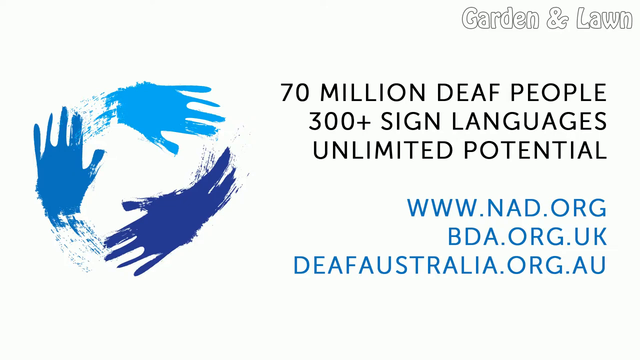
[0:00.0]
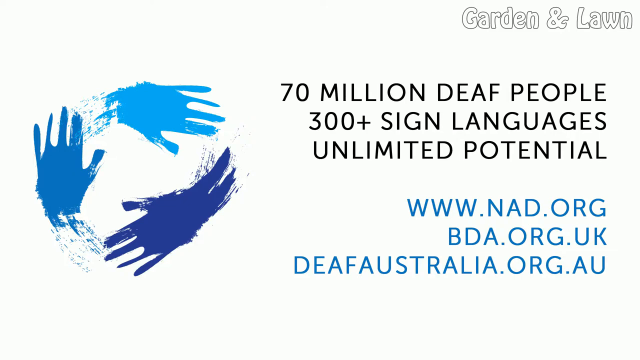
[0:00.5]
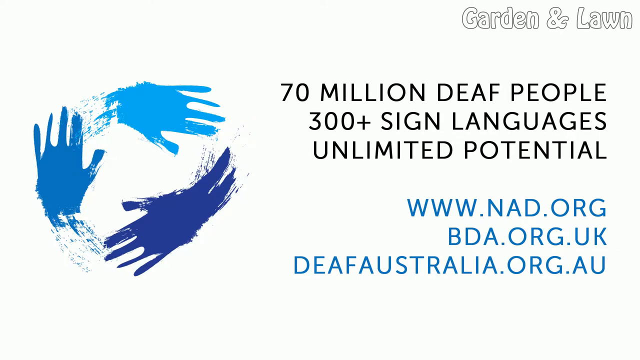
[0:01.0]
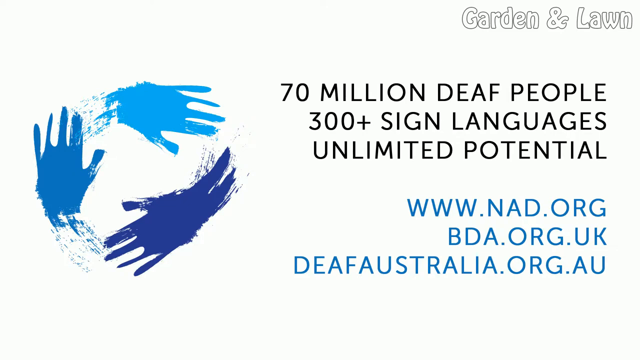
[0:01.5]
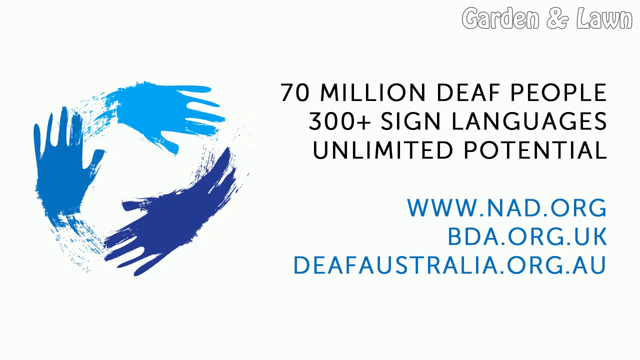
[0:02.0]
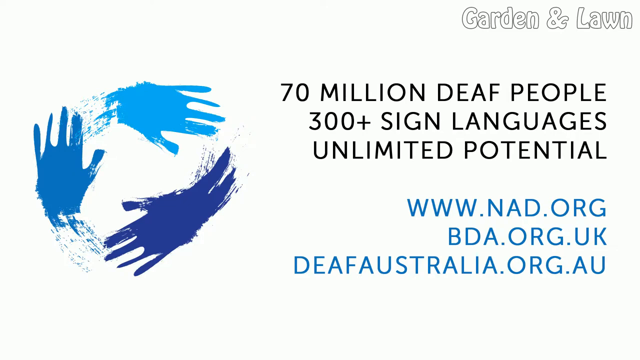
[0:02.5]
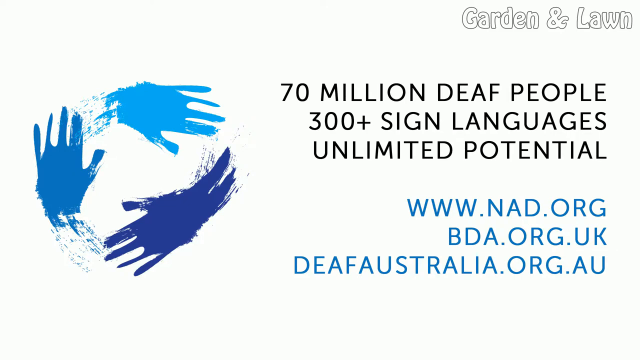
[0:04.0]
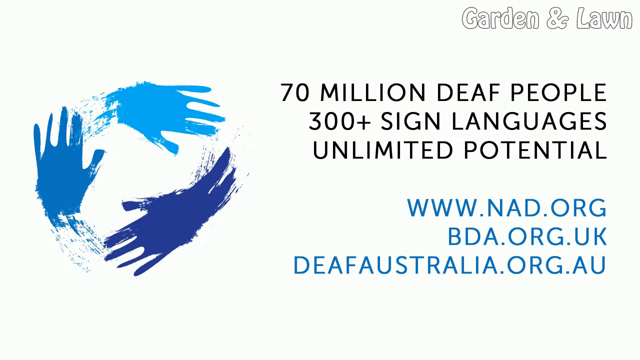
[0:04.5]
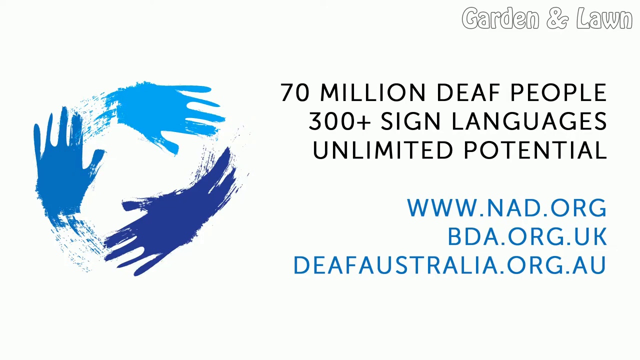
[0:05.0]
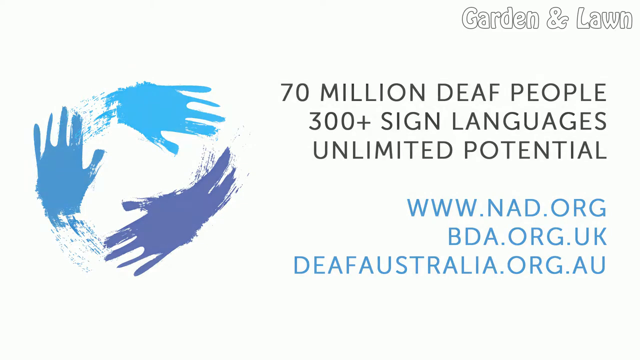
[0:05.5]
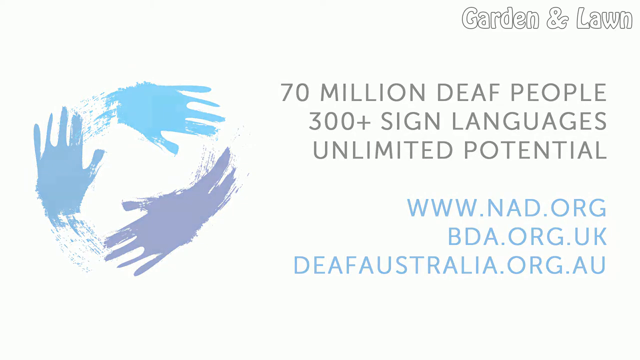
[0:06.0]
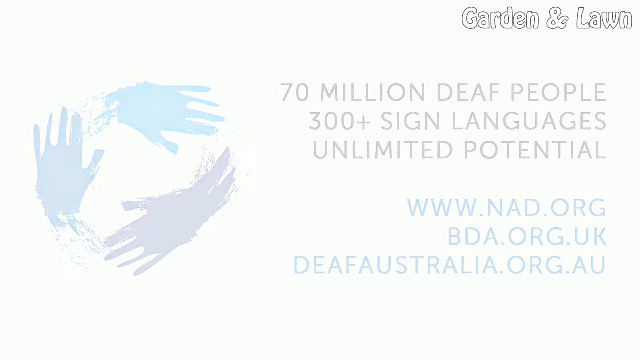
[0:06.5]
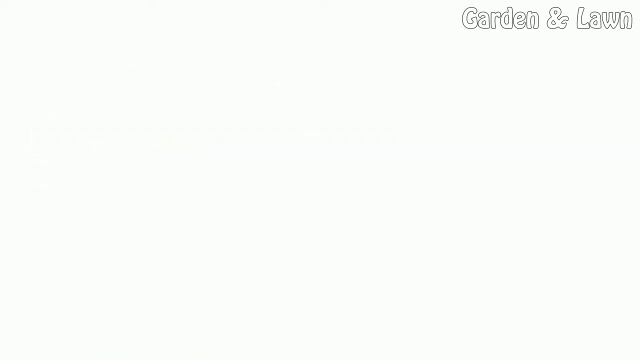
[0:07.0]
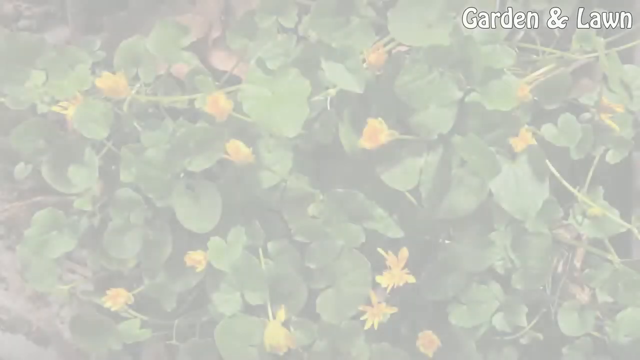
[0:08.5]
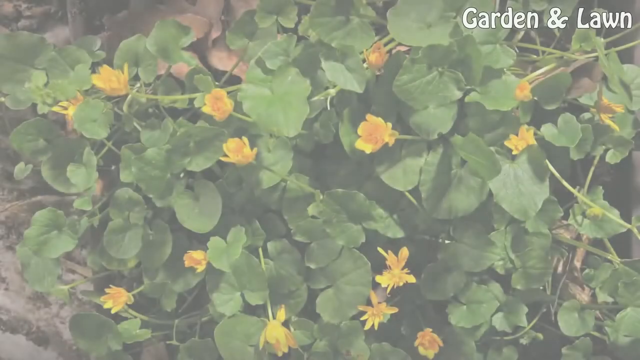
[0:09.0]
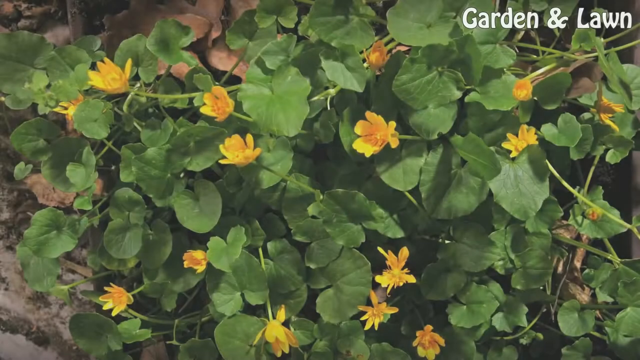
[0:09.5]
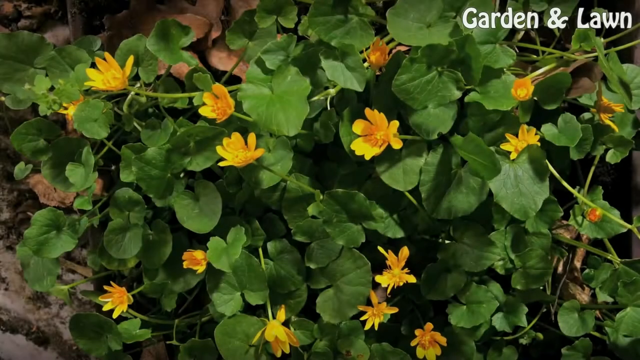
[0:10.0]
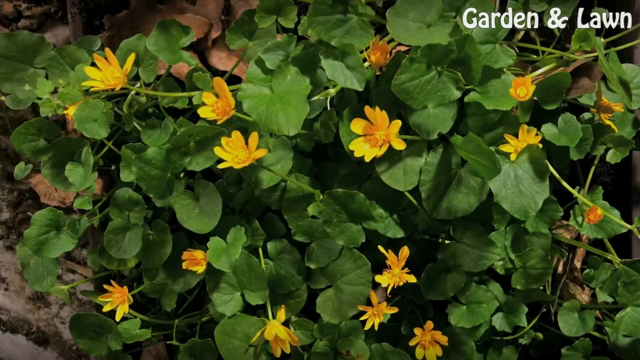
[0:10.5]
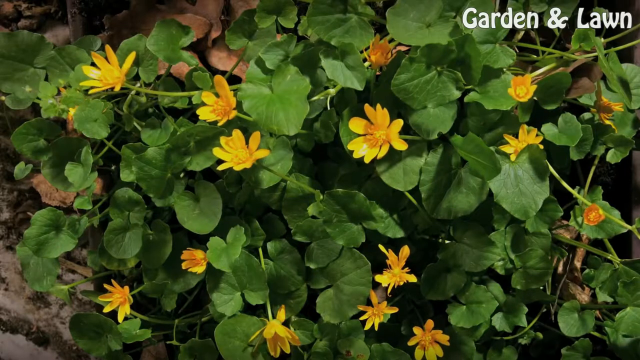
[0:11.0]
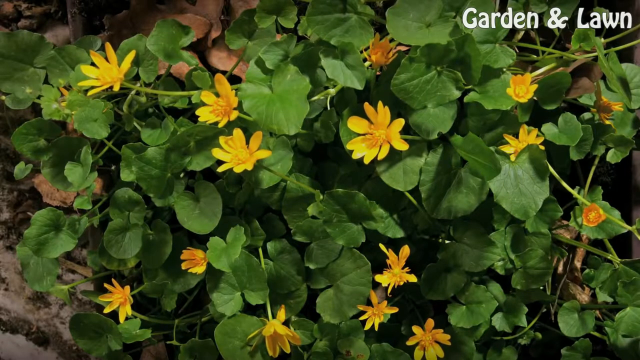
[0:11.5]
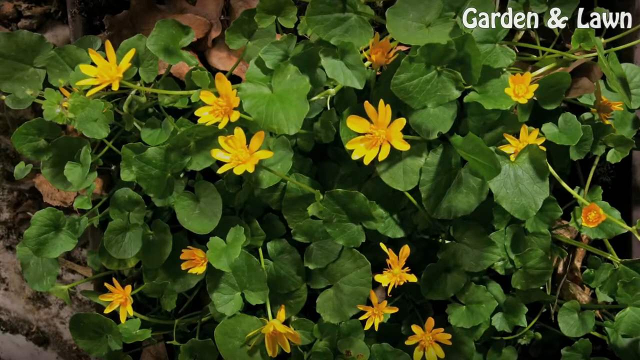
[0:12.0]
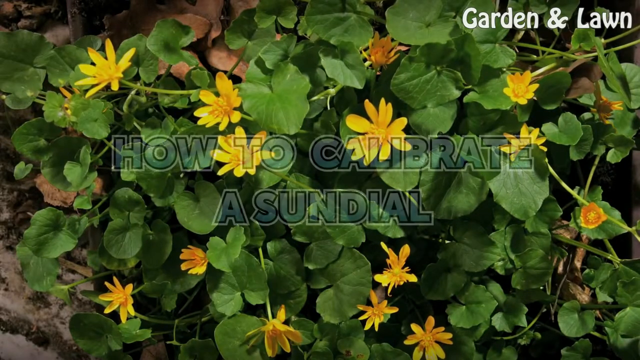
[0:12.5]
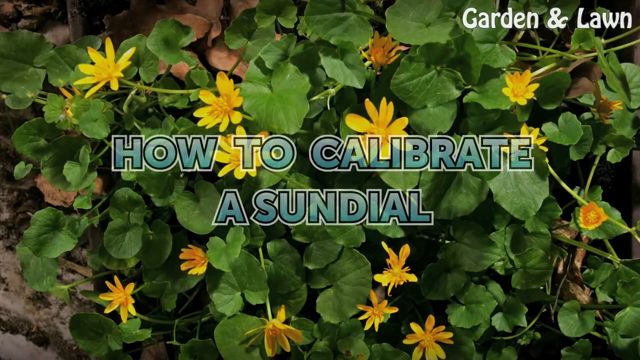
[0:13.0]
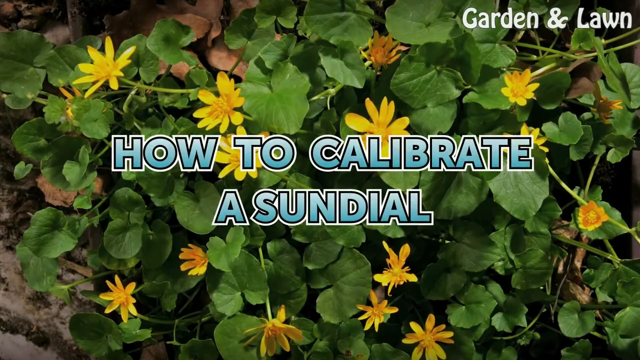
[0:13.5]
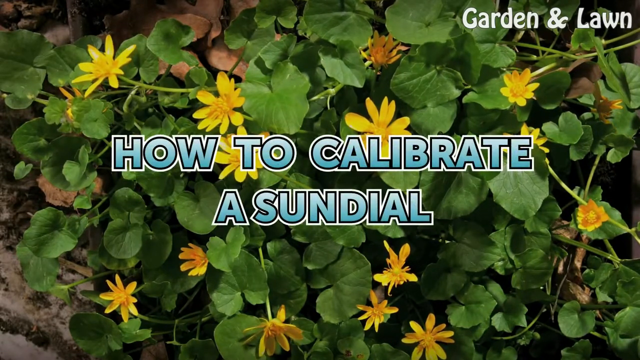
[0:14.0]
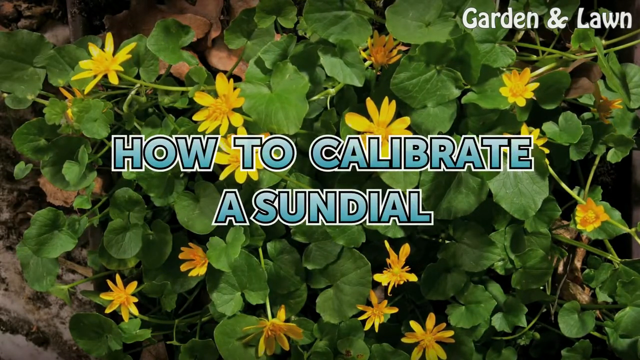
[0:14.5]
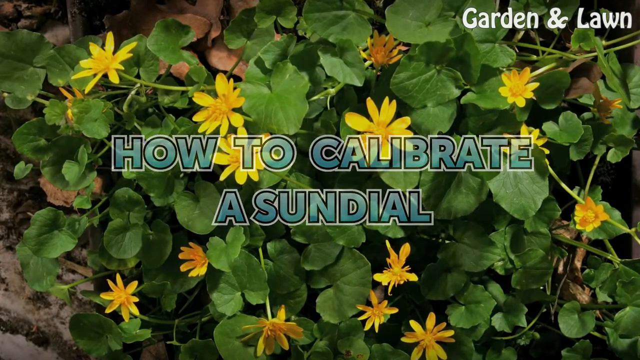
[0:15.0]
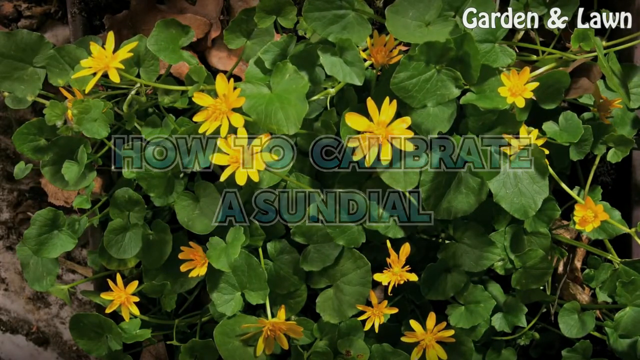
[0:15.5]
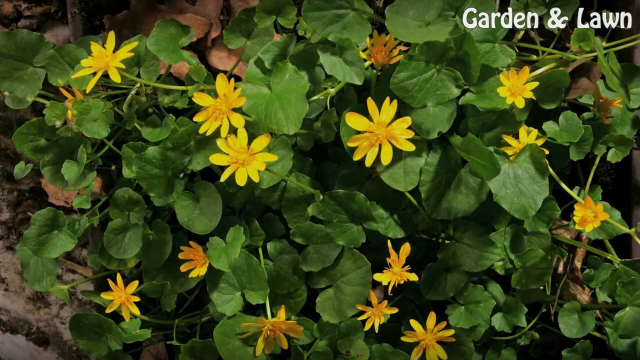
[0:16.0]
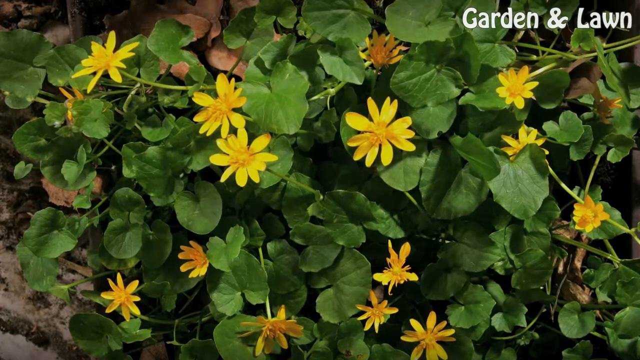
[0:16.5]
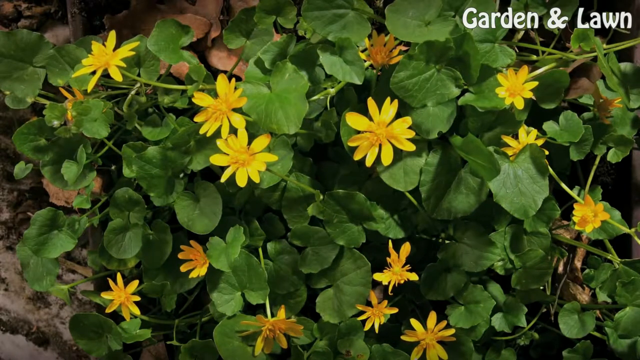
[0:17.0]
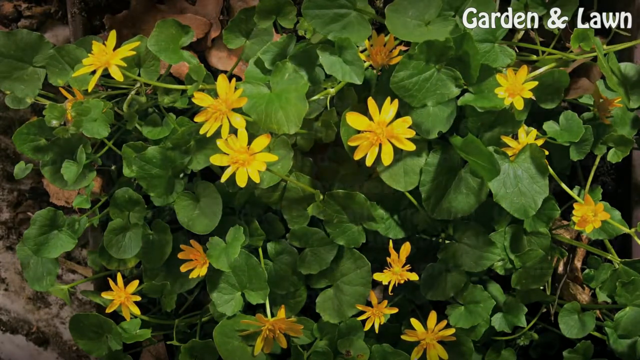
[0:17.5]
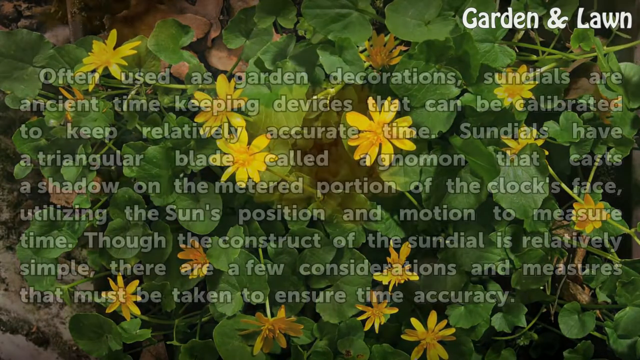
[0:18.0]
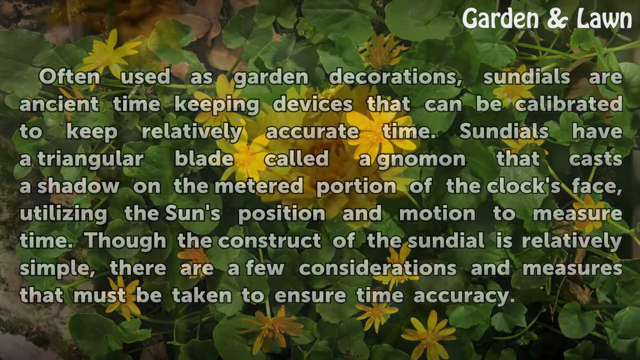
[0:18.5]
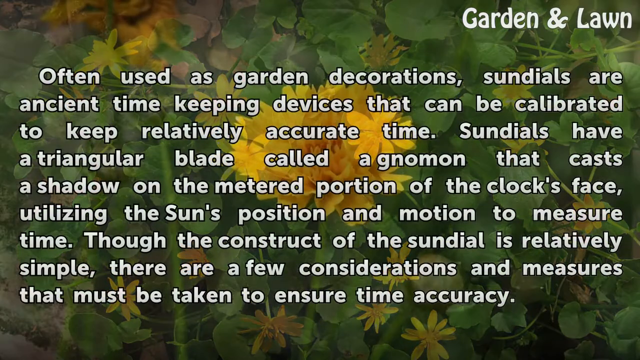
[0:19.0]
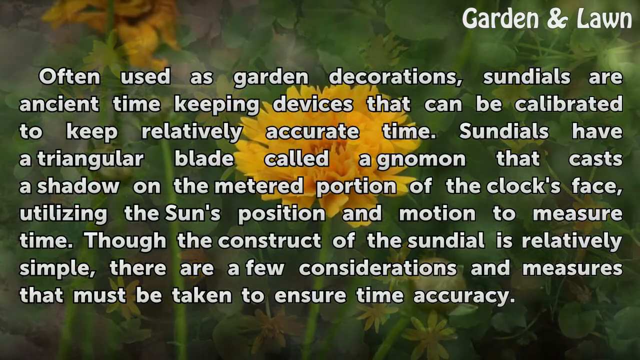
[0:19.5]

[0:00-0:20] Text reads "70 million Deaf people, 300 plus sign languages and limited potential," along with the web addresses www.nad.org, bda.org.uk and deafaustralia.org.au. Signs appear in mild blue, deep blue and apparently sea blue, and hands are shown joining together. Leaves are then shown with petals sprouting up, followed by the title "how to calibrate a sundial." Information follows noting that sundials are often used as a garden decoration and that "Sundials are ancient timekeeping devices that can be calibrated to keep relatively accurate time," with a triangular blade that casts a shadow, using the sun's position and motion to measure time, and that "Though the construct of the sundial is relatively simple, there are a few considerations and measures that must be taken to ensure time accuracy."